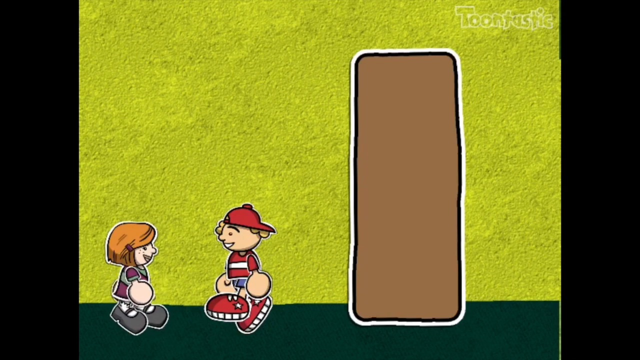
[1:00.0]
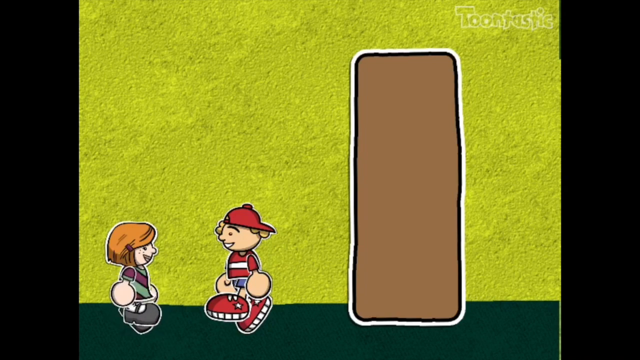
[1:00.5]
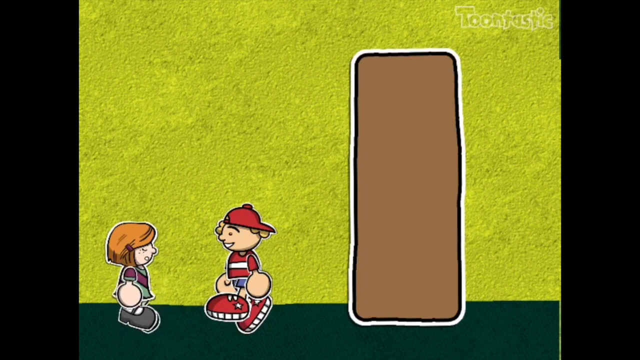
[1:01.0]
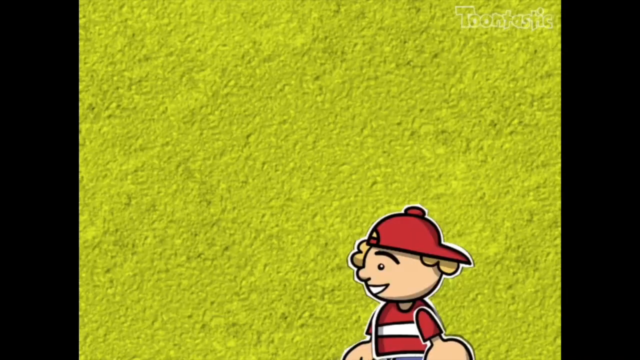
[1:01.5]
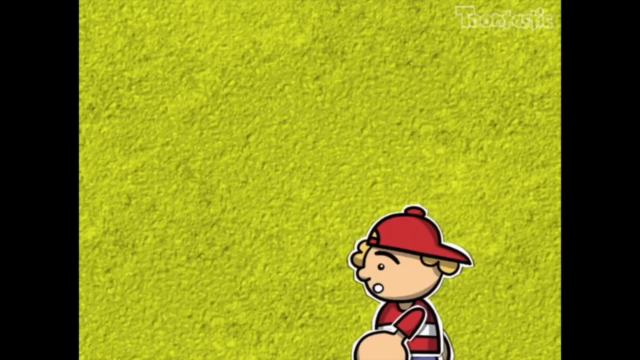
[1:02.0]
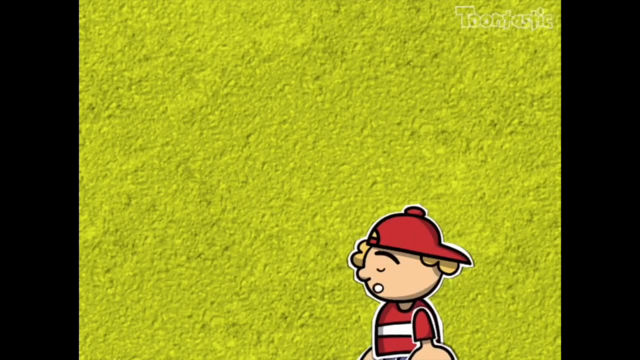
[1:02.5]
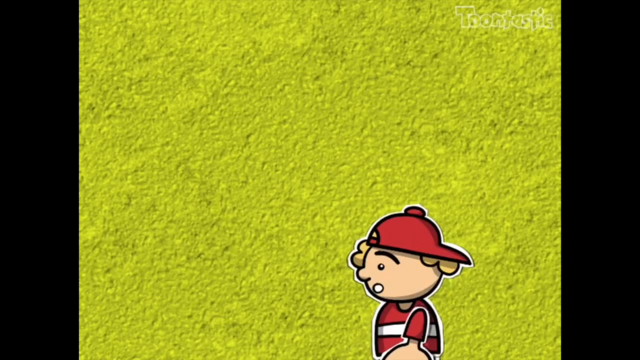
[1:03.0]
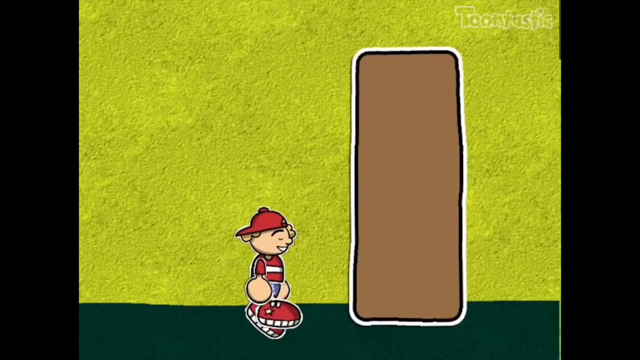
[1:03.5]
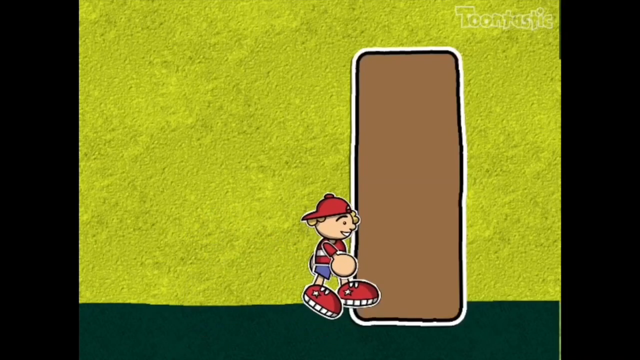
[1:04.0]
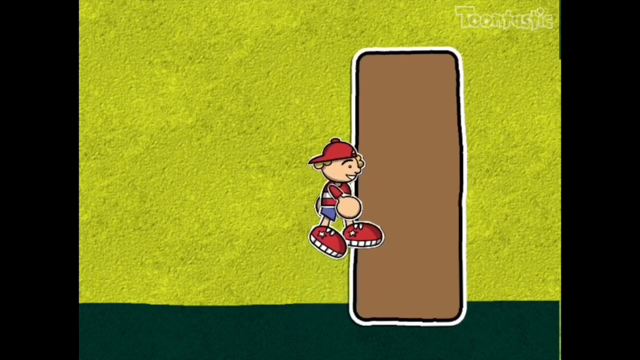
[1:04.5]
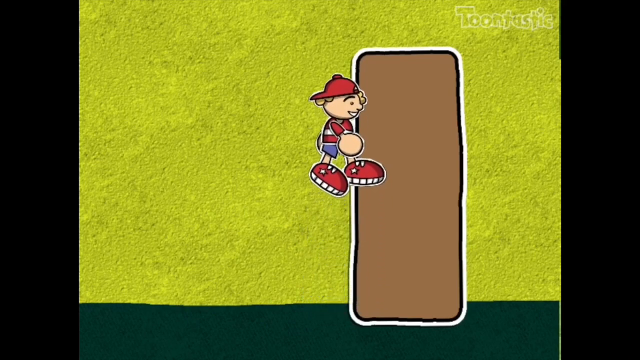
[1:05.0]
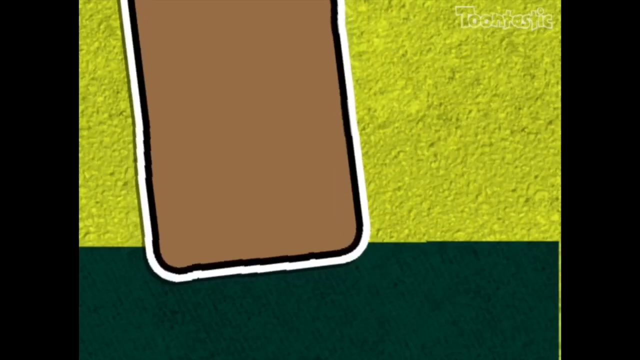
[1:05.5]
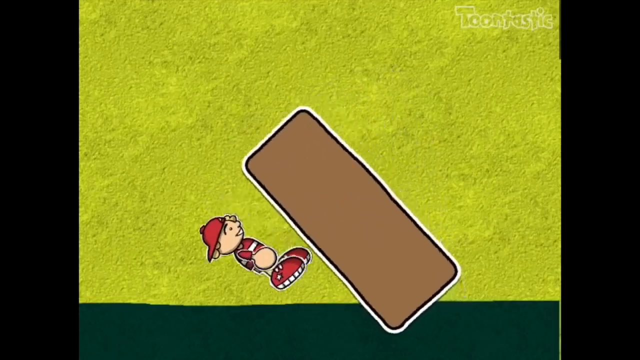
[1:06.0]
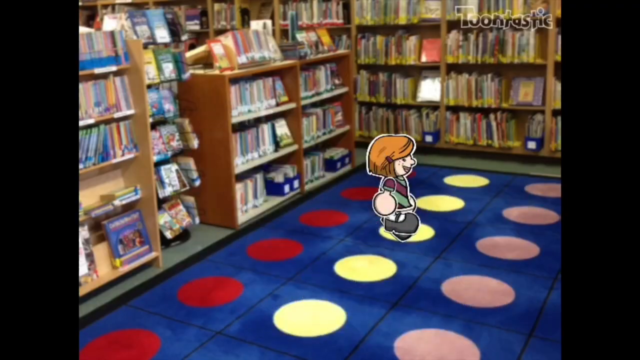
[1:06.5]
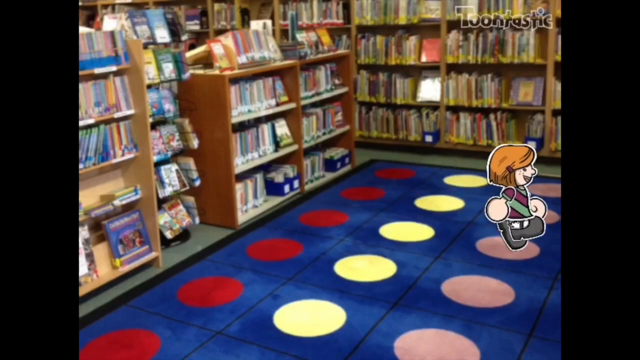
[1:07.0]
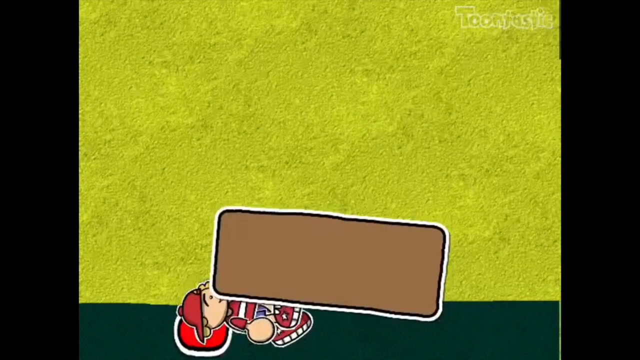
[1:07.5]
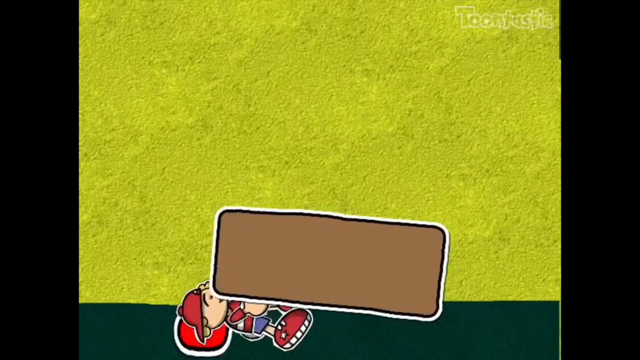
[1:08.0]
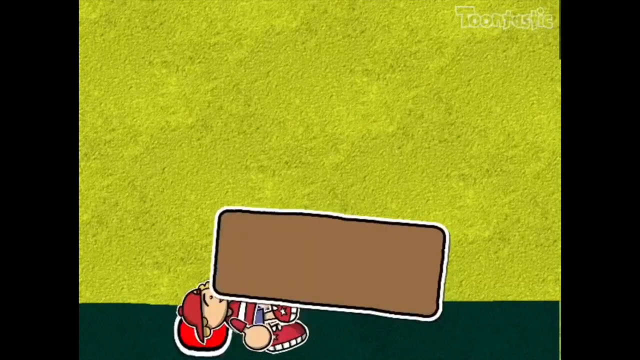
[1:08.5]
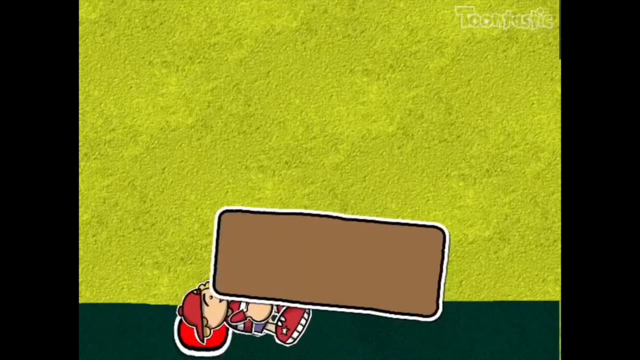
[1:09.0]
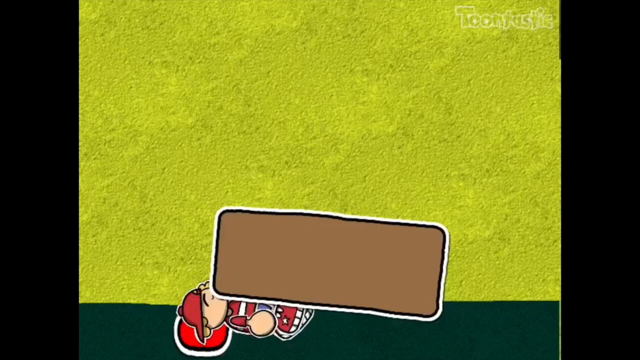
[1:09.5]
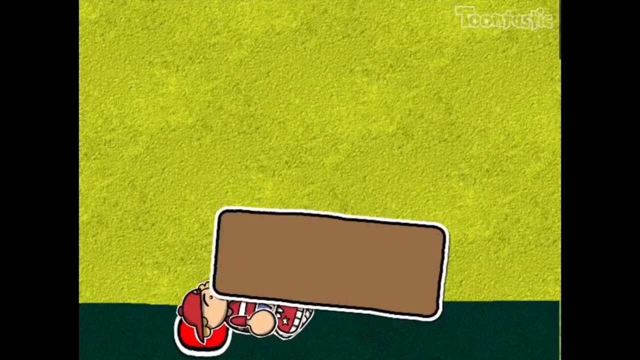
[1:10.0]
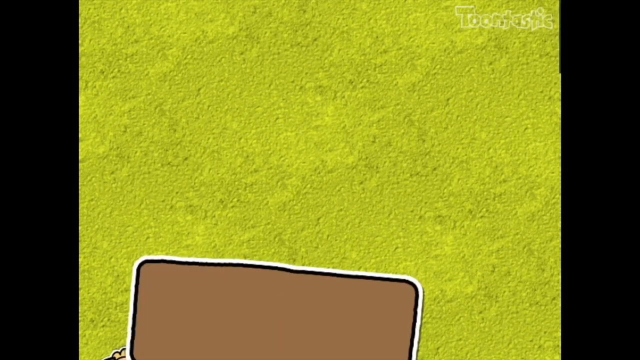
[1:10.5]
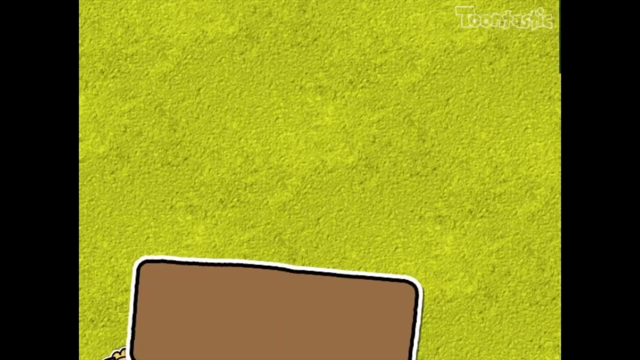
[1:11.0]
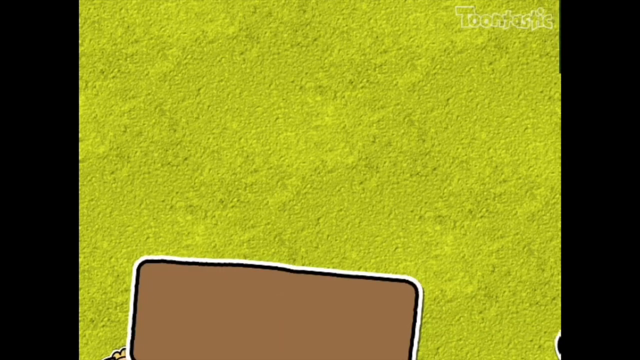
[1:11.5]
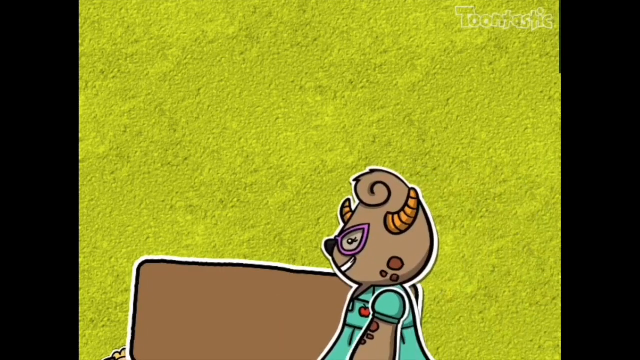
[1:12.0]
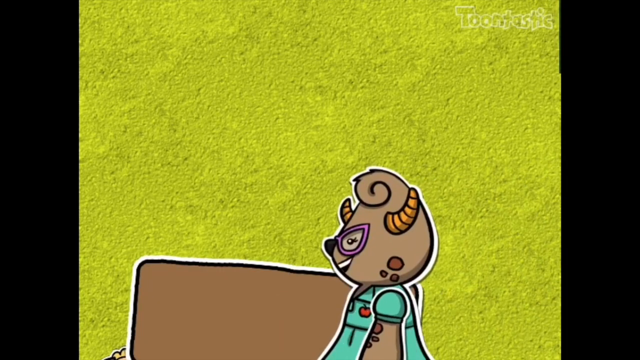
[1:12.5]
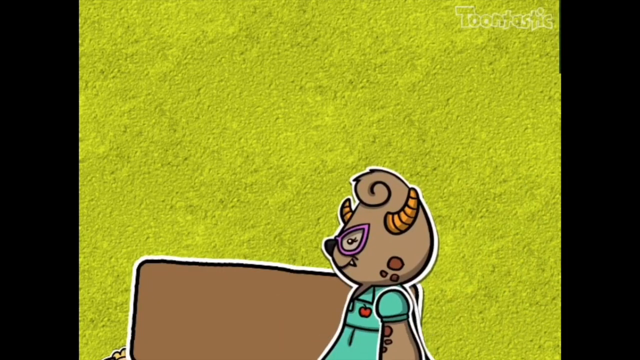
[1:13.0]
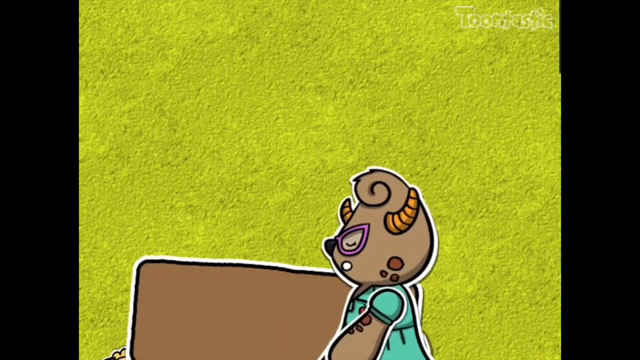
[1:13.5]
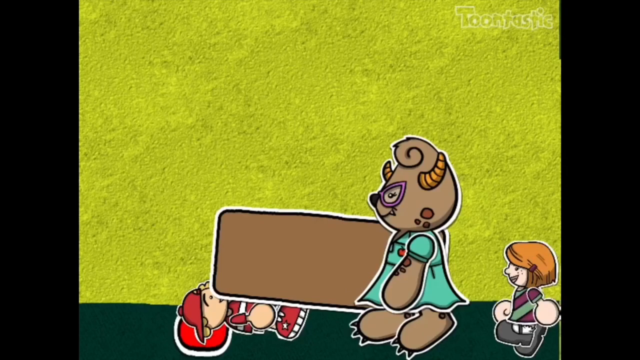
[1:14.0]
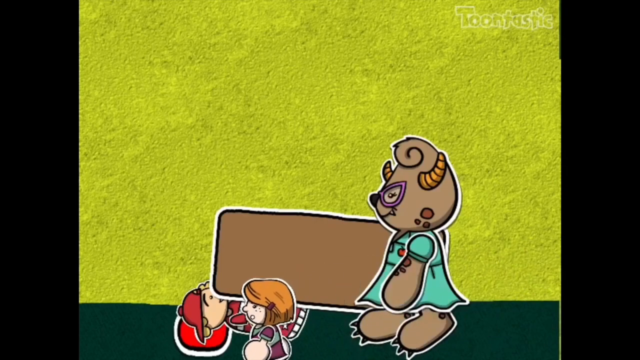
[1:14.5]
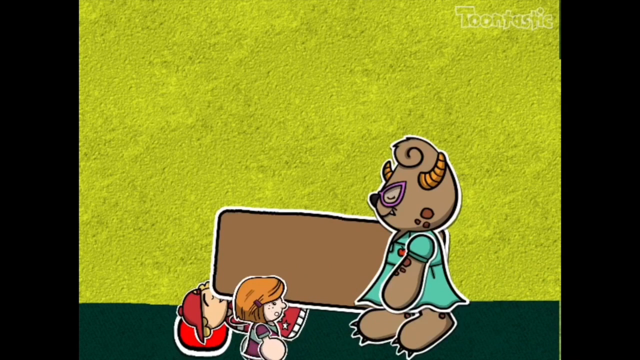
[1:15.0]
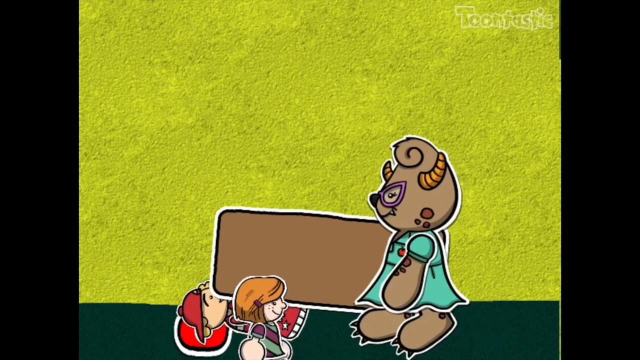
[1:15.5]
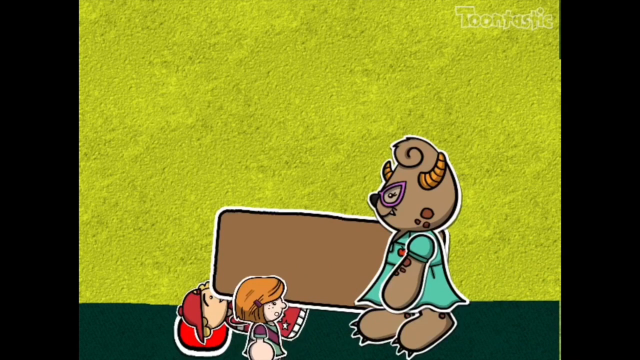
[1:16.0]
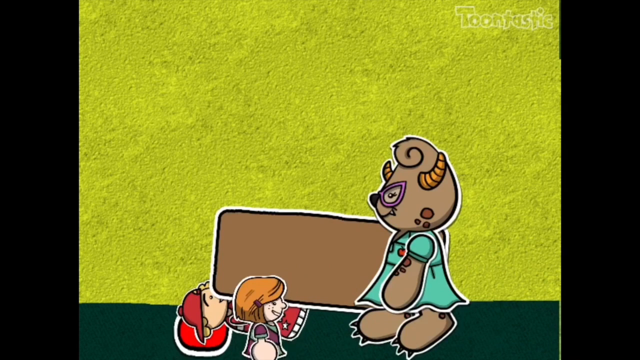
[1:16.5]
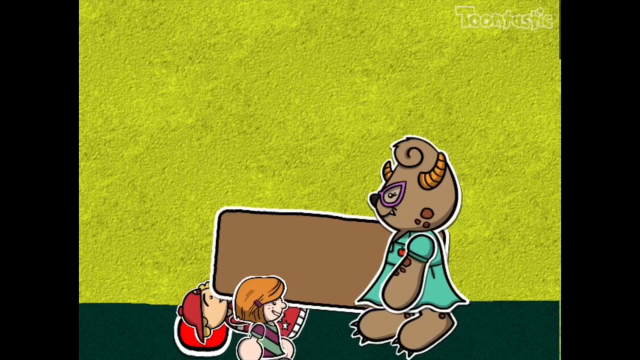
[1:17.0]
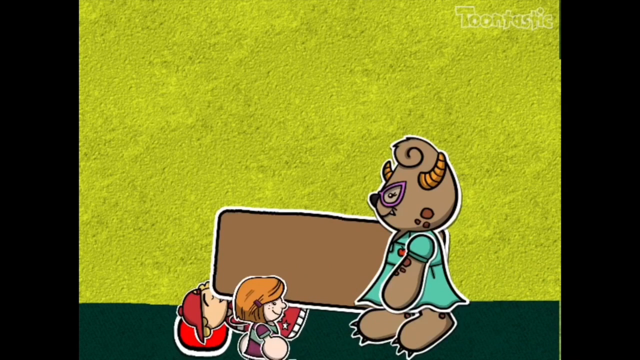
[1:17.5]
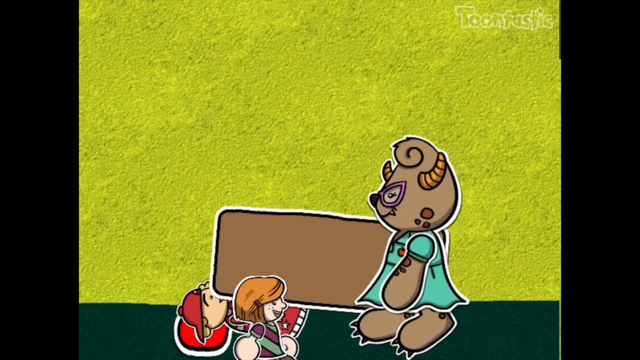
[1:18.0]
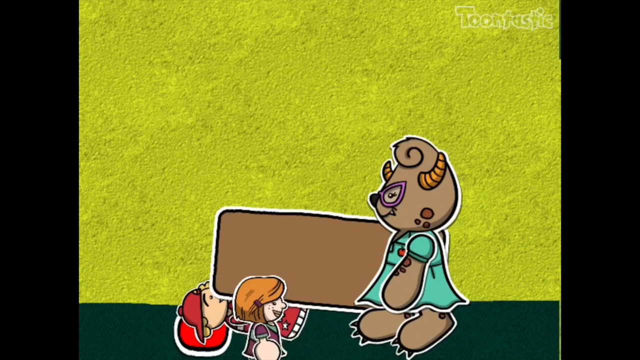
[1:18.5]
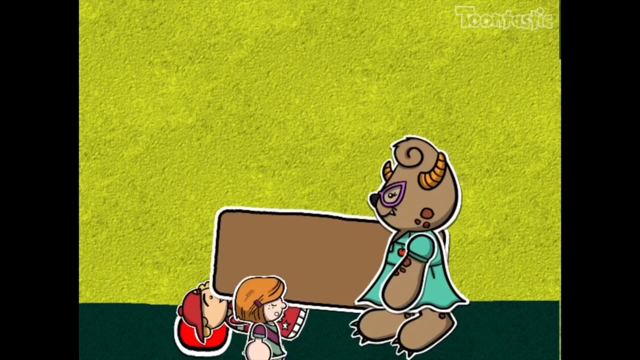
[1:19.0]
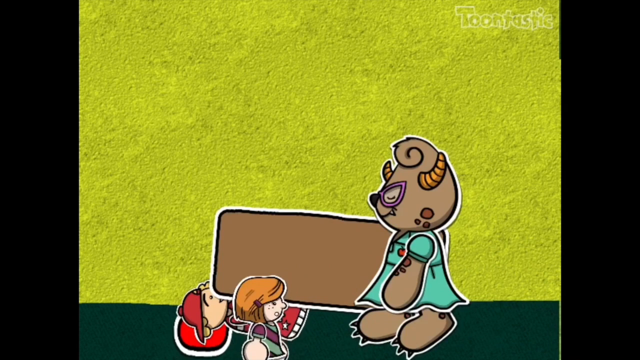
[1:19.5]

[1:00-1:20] The animated boy and girl are still there. The boy tries to pass through the door, and the door falls on him; he struggles while the door is still on top of him. Another animated girl who has not appeared before comes out, with a human form and a head like an elephant's, wearing a green gown. She comes out of a room that is like a library or bookstore, and there are several rooms. The girls try to rescue the boy the door fell on.